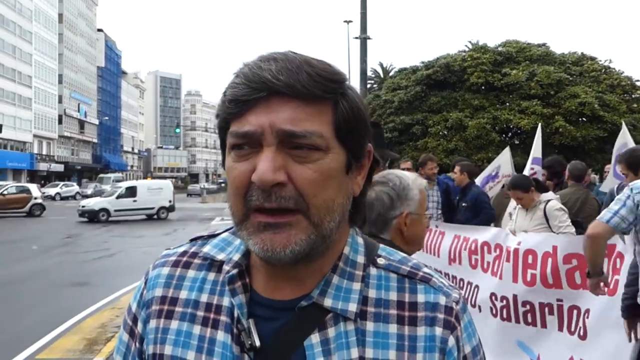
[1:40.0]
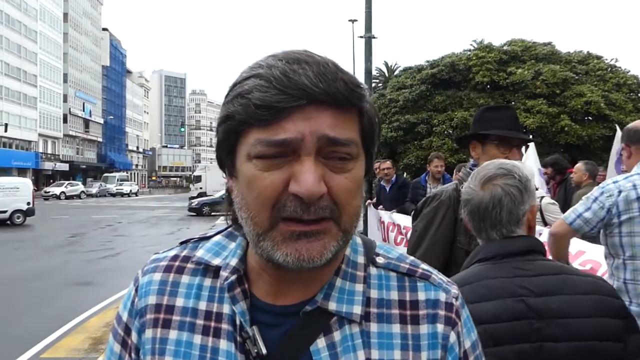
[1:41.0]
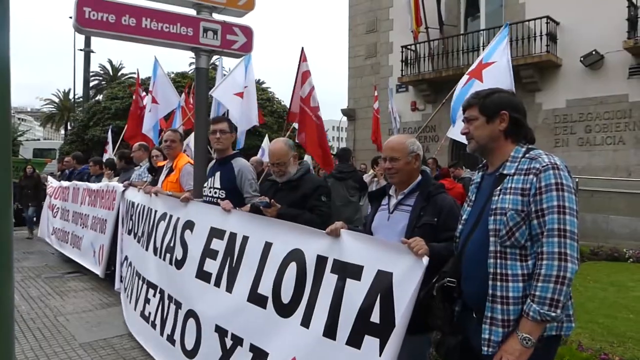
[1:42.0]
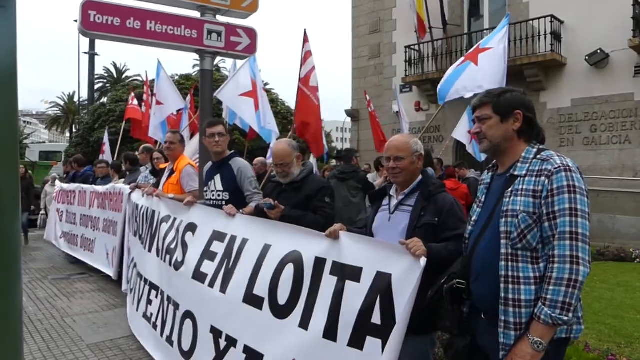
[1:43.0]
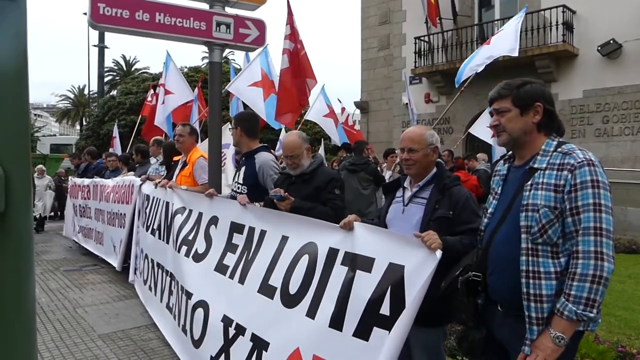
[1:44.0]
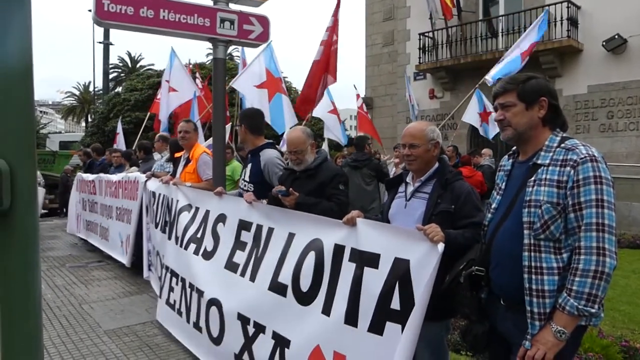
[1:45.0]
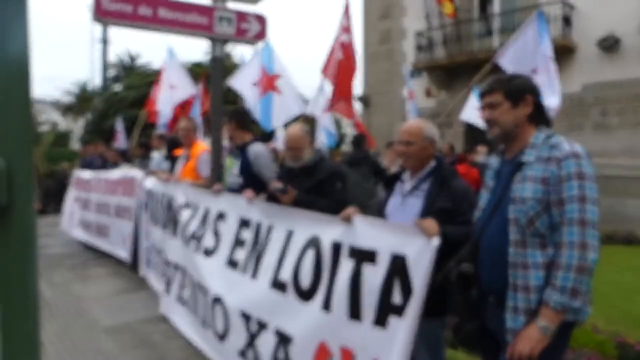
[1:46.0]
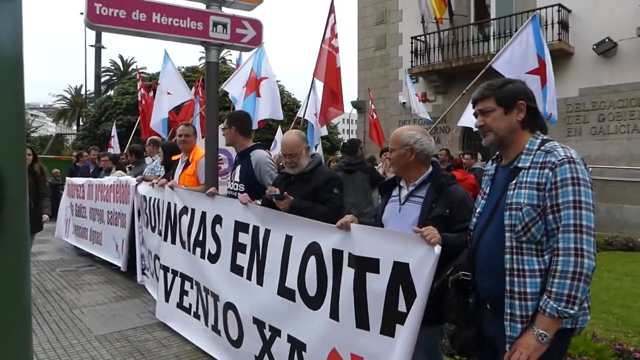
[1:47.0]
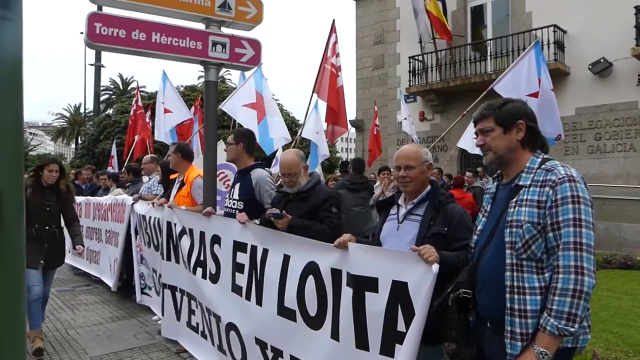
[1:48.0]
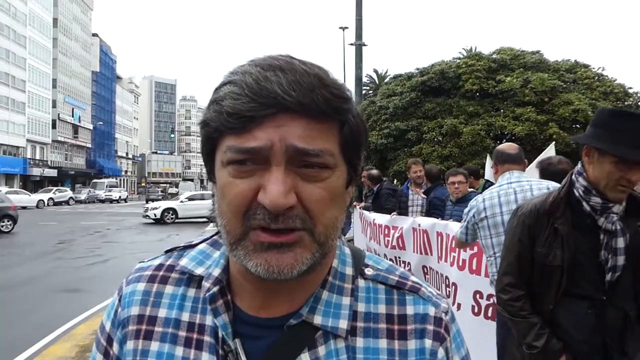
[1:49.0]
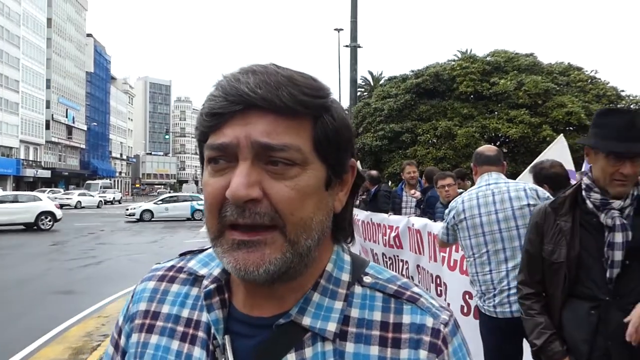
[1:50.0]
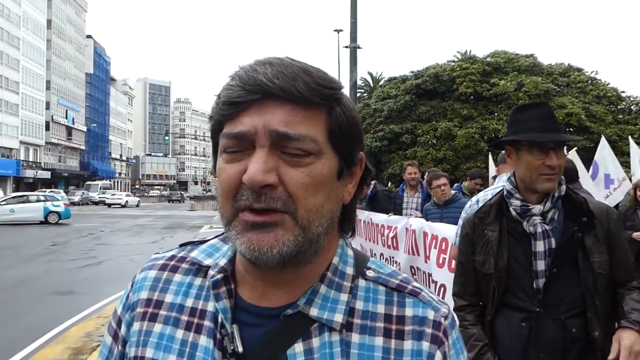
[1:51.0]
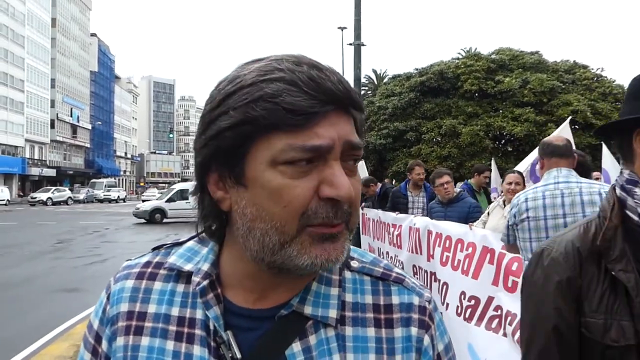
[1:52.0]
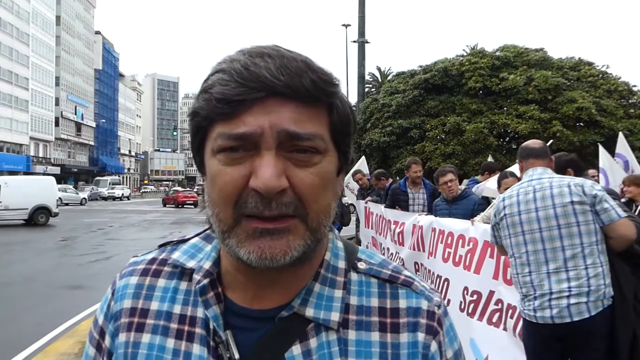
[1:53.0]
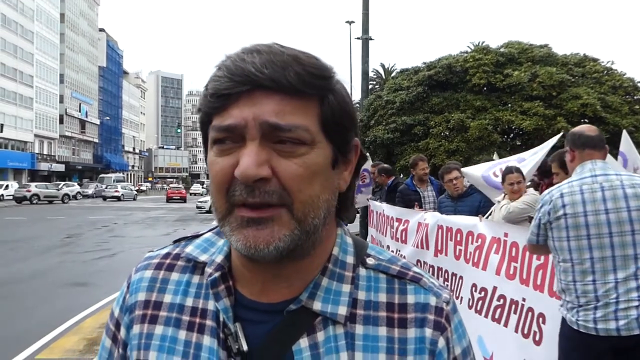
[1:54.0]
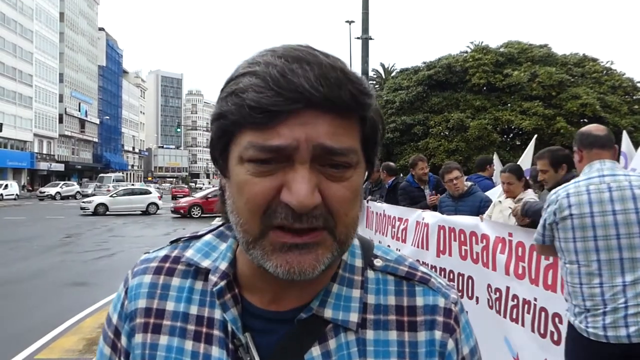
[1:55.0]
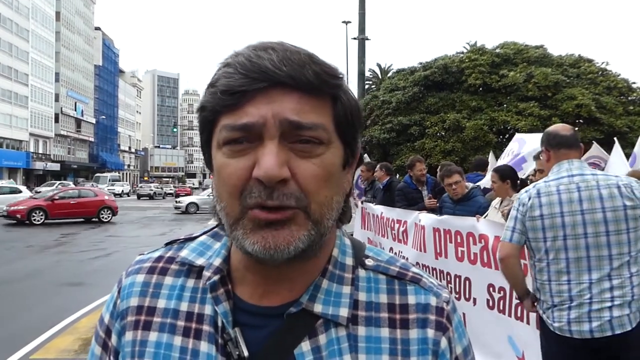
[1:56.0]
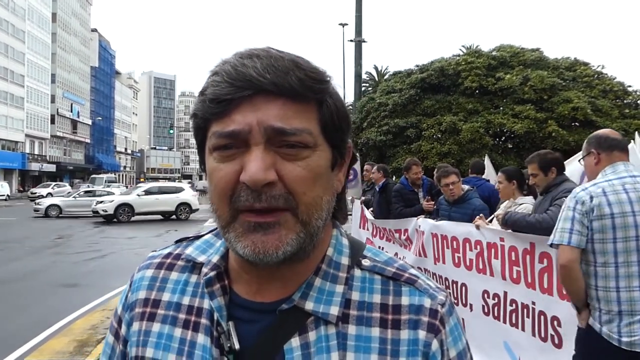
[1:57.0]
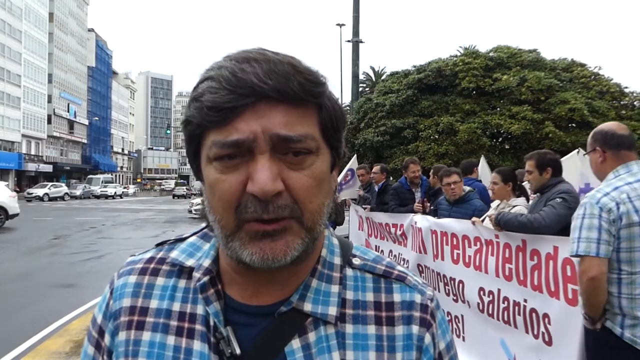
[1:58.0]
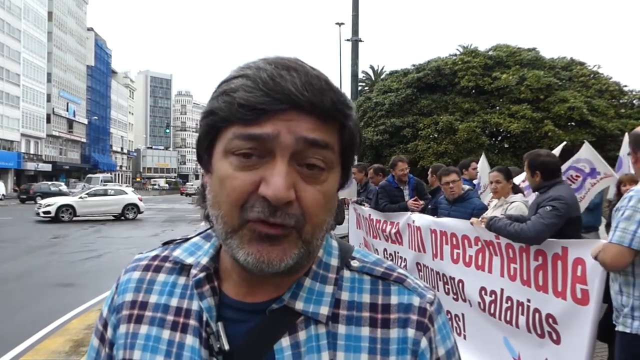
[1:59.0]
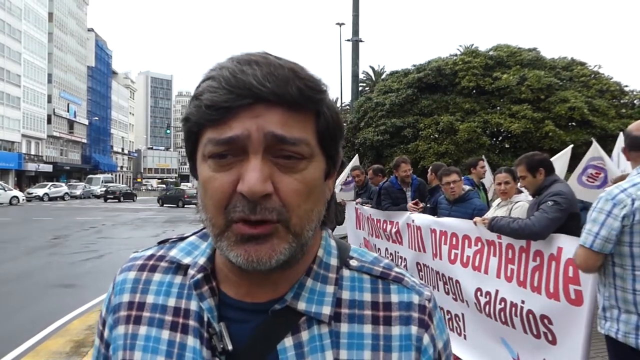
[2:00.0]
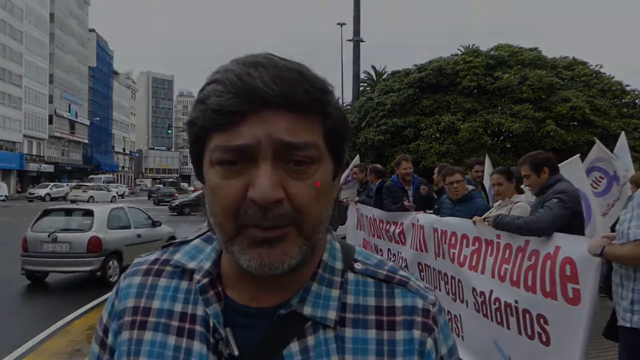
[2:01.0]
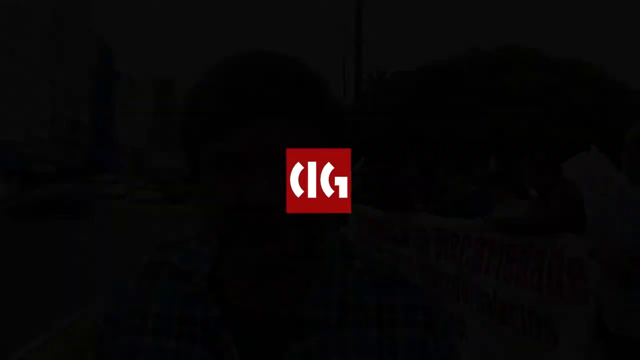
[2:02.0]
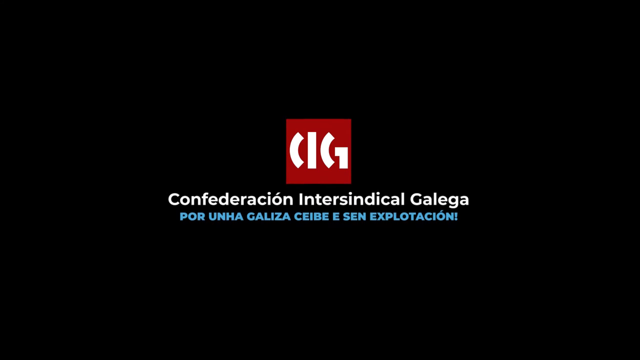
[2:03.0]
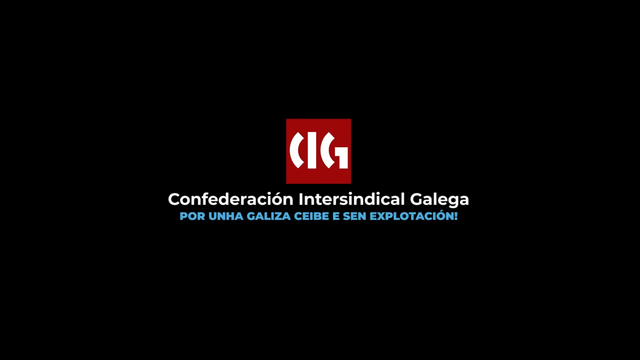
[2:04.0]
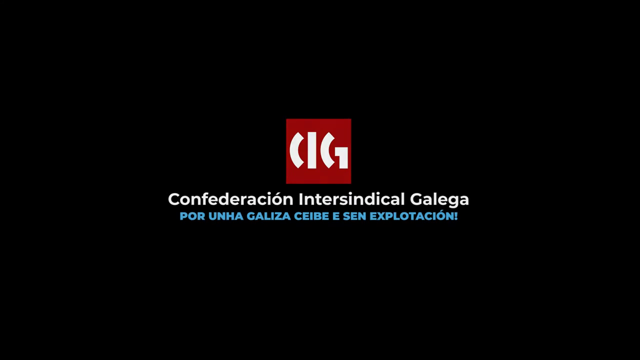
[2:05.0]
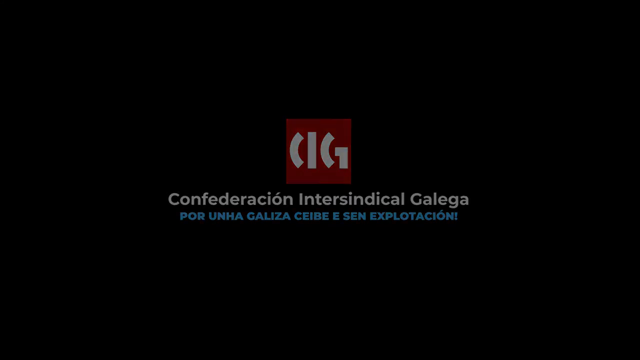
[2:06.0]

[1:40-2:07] An outdoor news story about demonstrations and strikes concerning ambulance workers, and maybe other public service workers, shows the man in the blue checked shirt in a head-and-shoulders interview shot, with demonstrators on his right and a busy wide road on his left. The scene then changes to the man in the checked shirt standing on what is probably a picket line; the group has banners in front of them and holds up flags. Some pedestrians walk by on the pavement. The demonstration is peaceful, with the demonstrators standing kind of at the back of the wide pavement, not obstructing it. The video then returns to the man in the checked shirt being interviewed on the side of the road before the news report's logo appears on the screen.